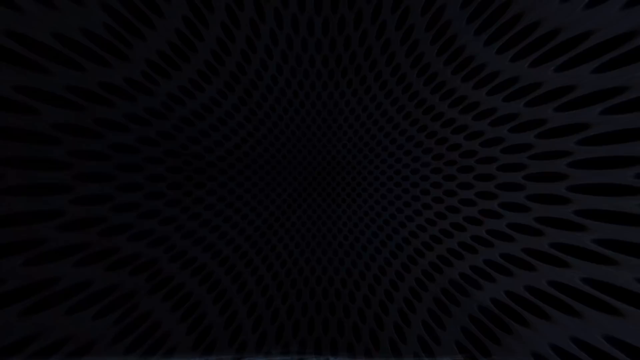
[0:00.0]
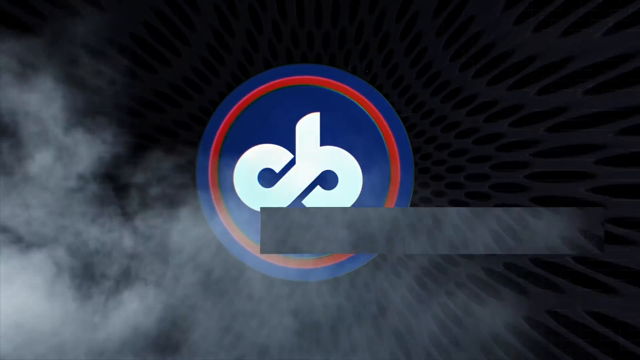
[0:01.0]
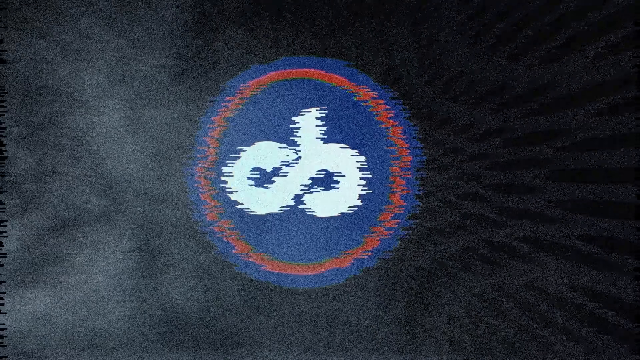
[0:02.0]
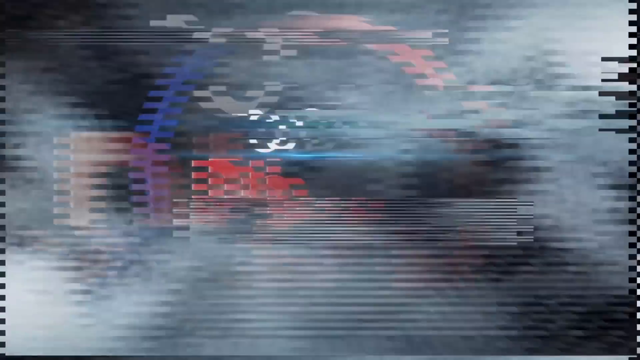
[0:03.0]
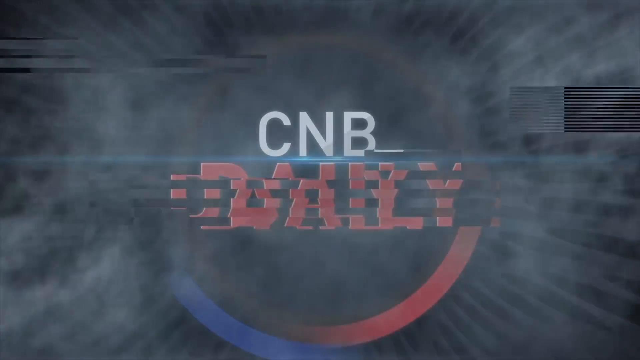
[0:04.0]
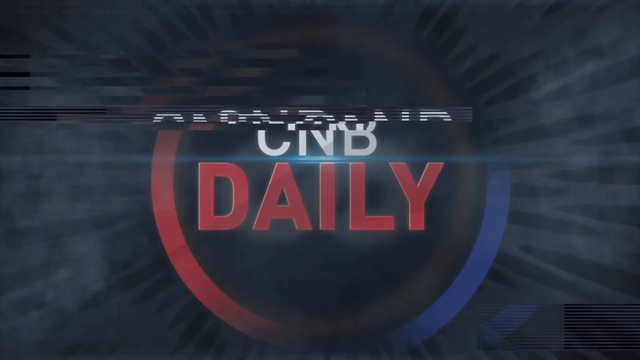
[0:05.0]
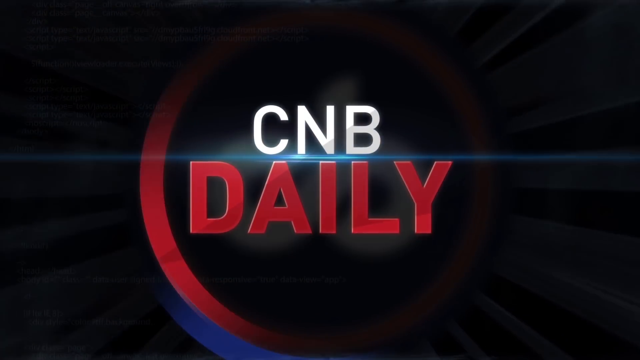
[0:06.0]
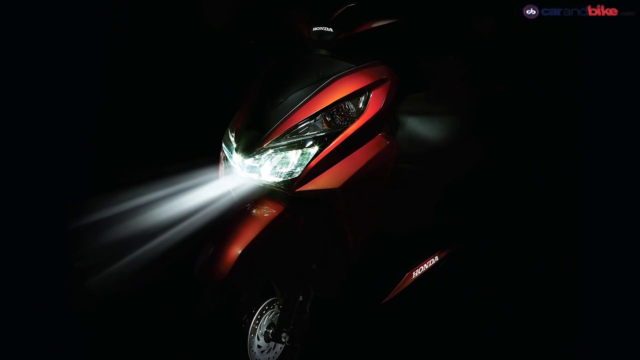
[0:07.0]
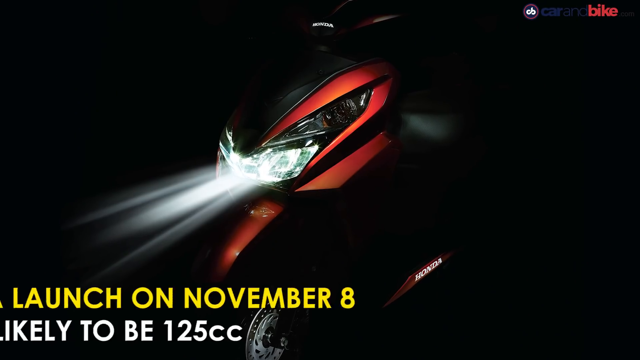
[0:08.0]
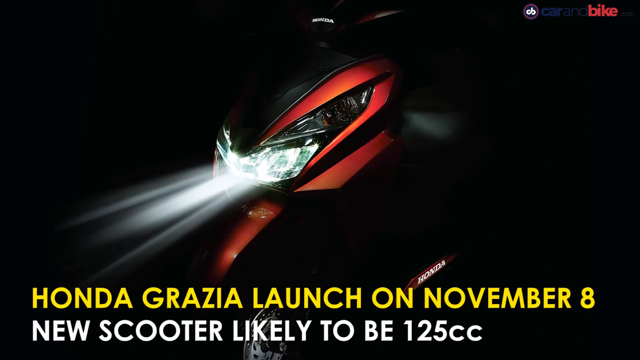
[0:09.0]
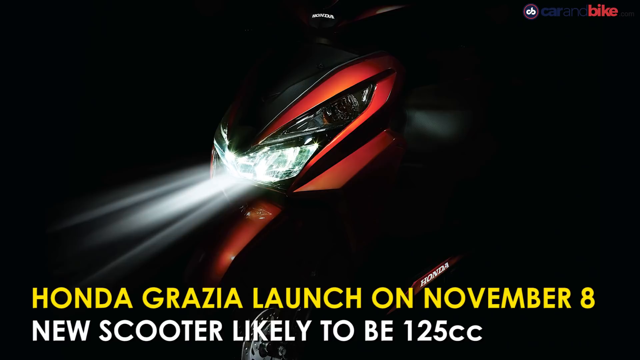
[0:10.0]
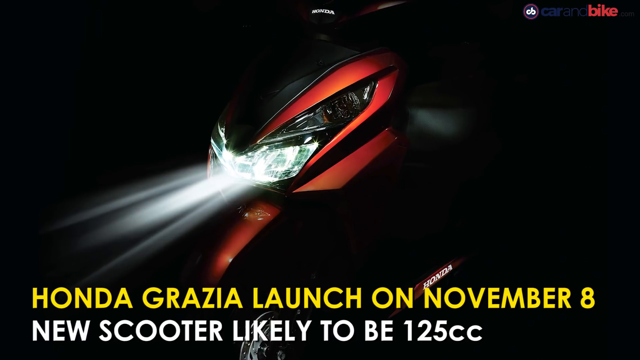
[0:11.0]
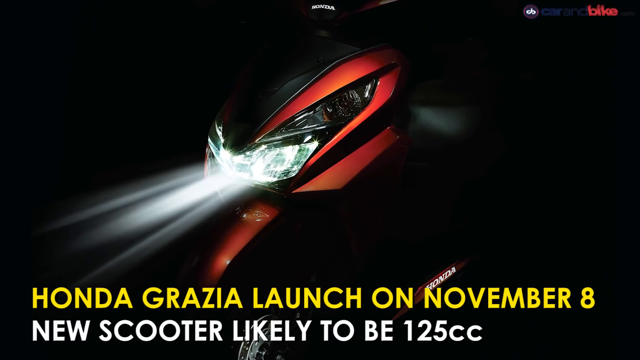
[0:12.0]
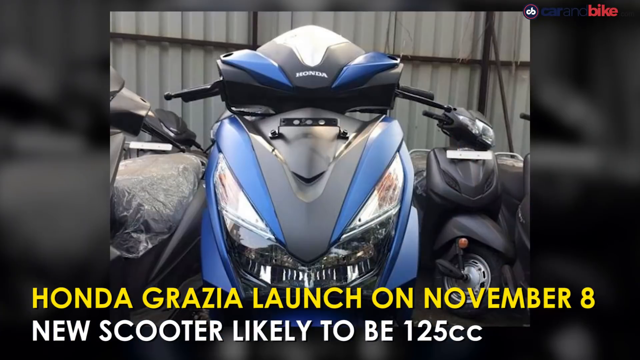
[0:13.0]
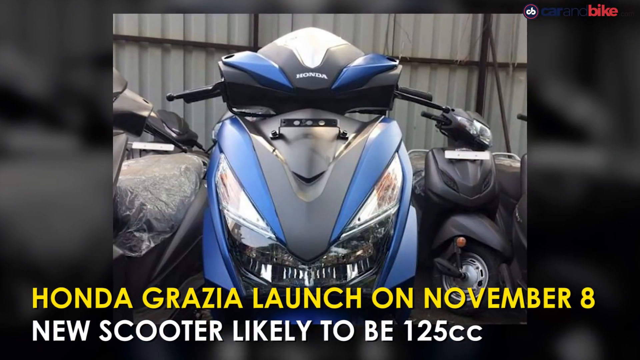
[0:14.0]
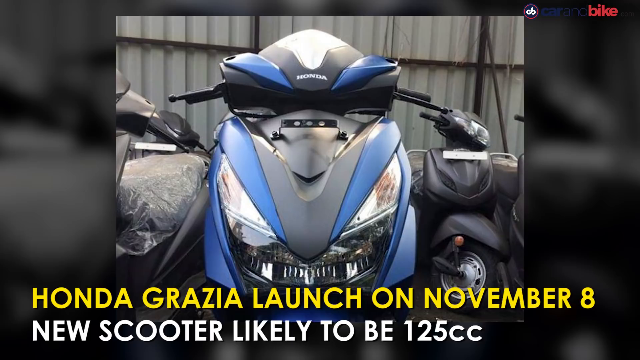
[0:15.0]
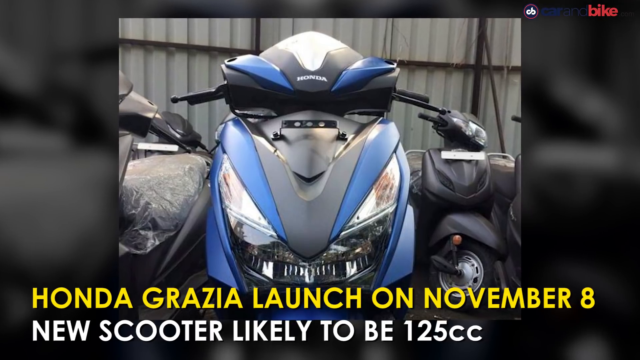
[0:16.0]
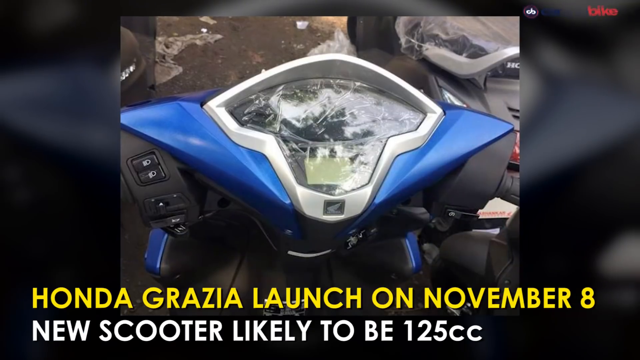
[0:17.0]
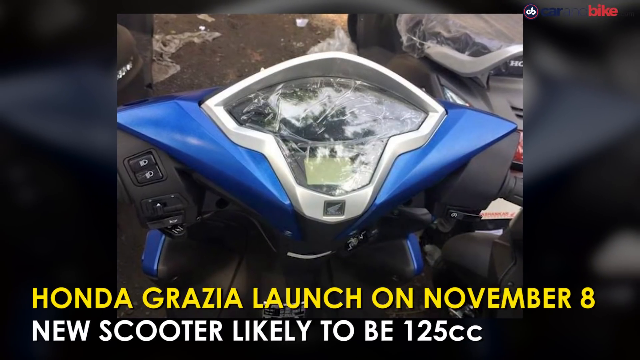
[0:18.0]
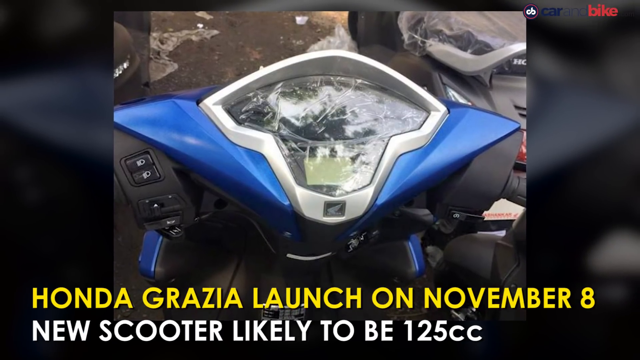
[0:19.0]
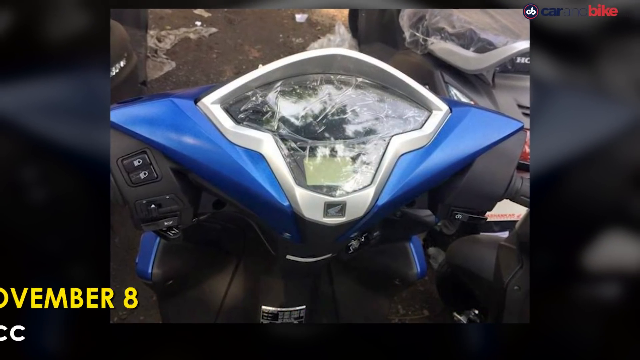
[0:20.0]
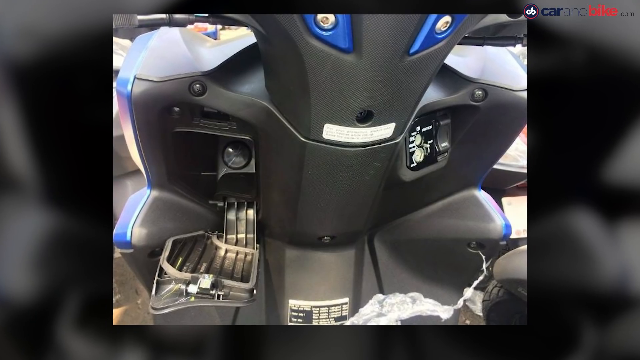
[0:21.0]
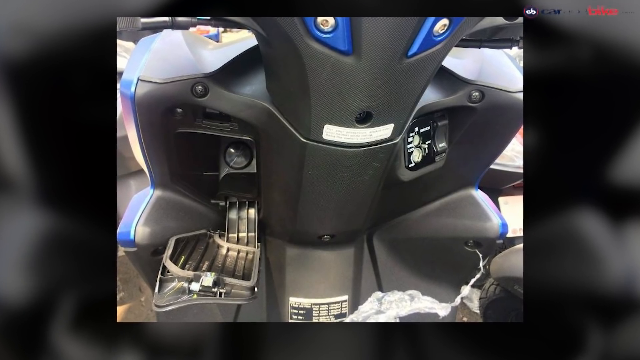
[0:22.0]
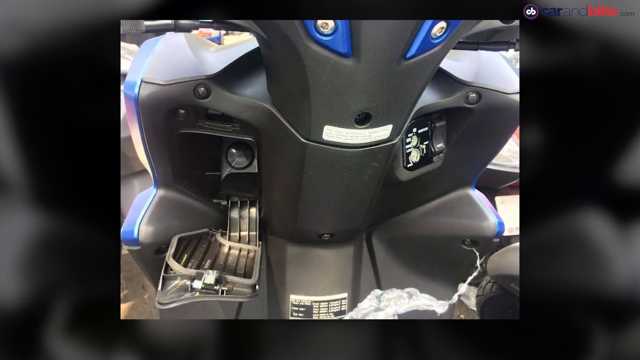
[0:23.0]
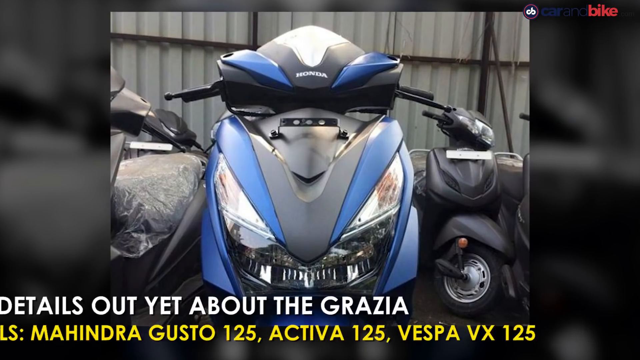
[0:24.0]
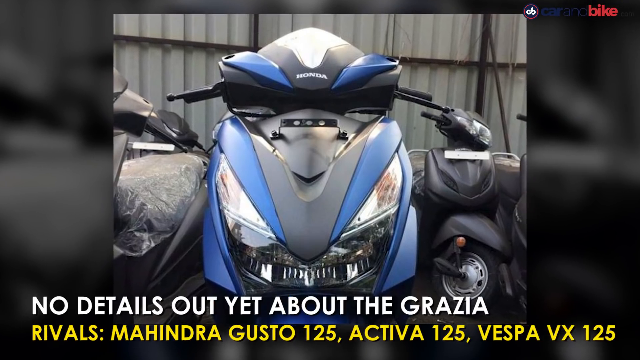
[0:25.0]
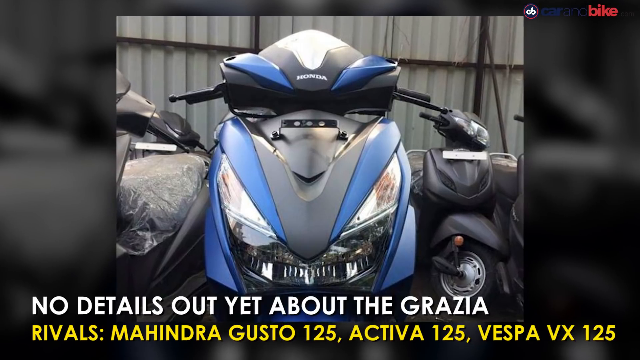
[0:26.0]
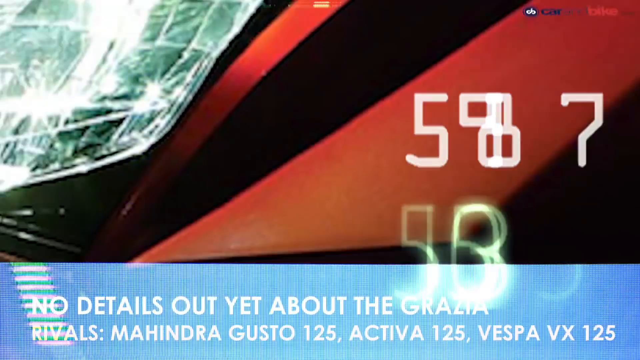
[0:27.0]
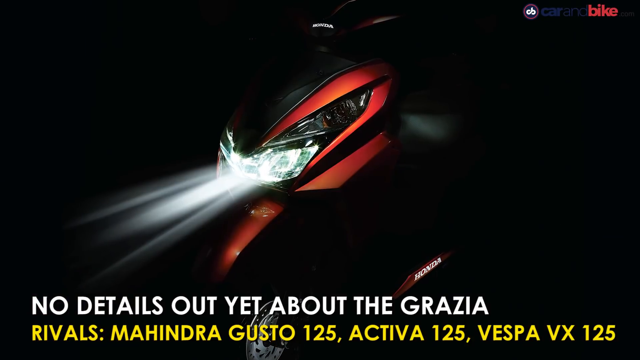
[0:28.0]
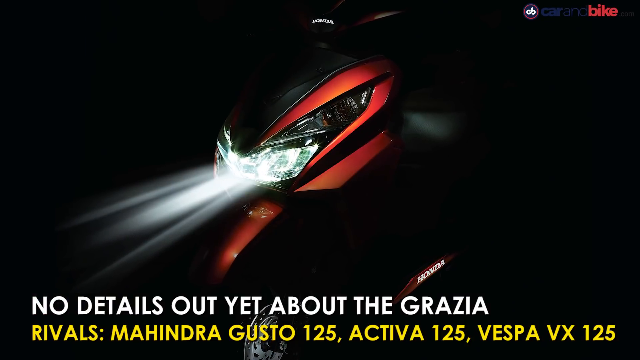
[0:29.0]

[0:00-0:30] A scooter appears in the center of the screen with information about its upcoming release. The video looks like it may be a promotional video for a dealership selling the scooter, or possibly a YouTube review of upcoming motorized scooters. One particular model is featured constantly, with cuts between still shots. The still photos are edited with slow zoom-ins and zoom-outs to look a little like moving pictures, and there are details underneath. One scooter is red and the next is blue, but it is the same model. The images look like stock photos from a website along with photos taken at a dealership. Fast cuts that look like something from a YouTube video appear between each individual pitch, suggesting it is probably not an official video from the manufacturer.